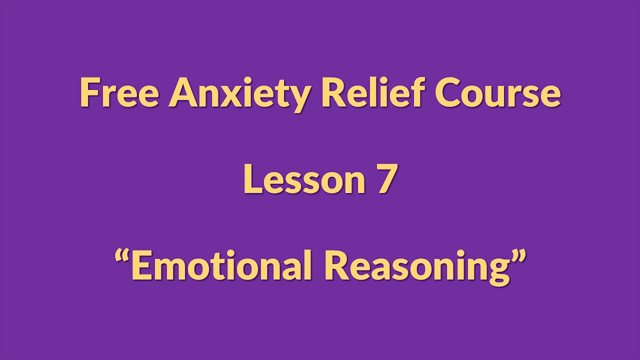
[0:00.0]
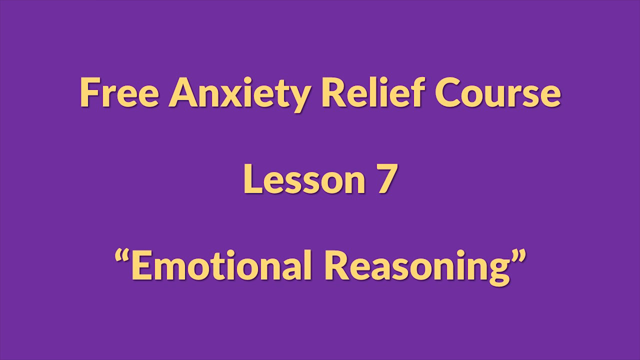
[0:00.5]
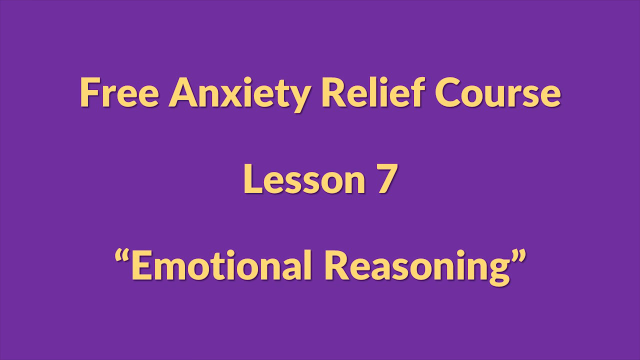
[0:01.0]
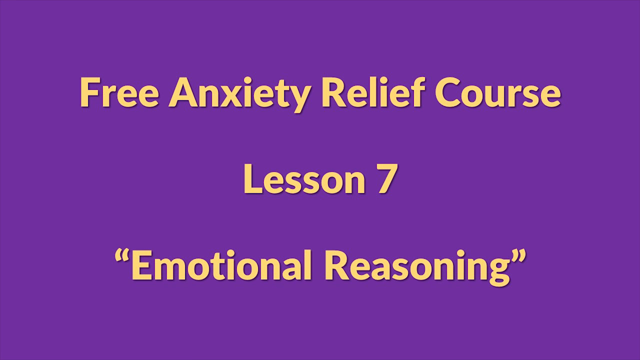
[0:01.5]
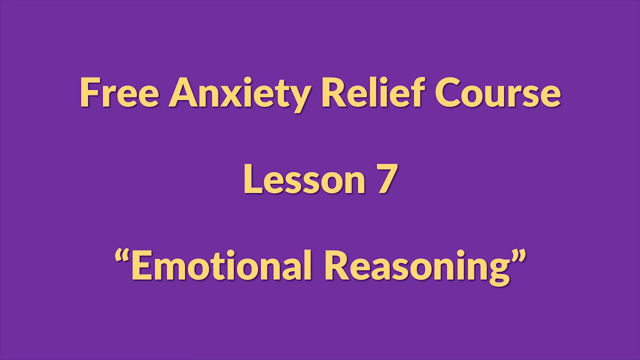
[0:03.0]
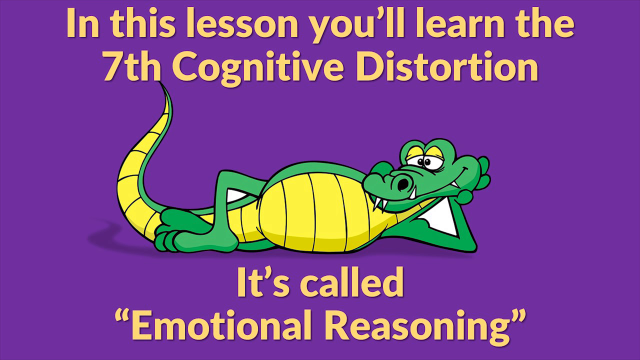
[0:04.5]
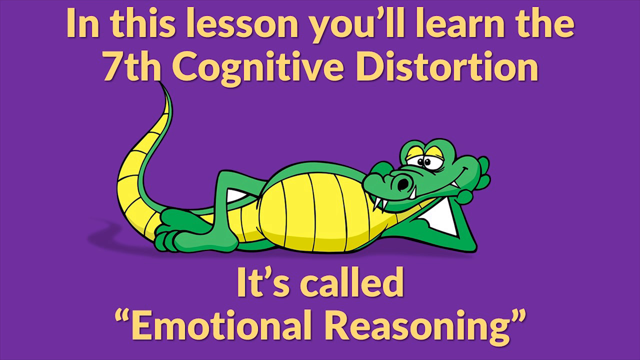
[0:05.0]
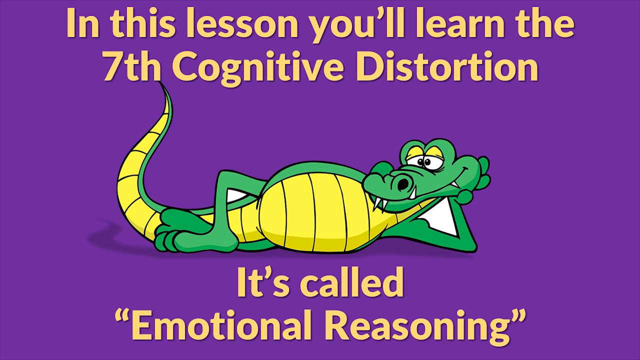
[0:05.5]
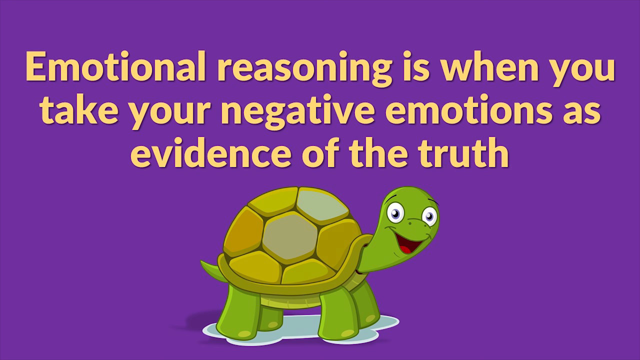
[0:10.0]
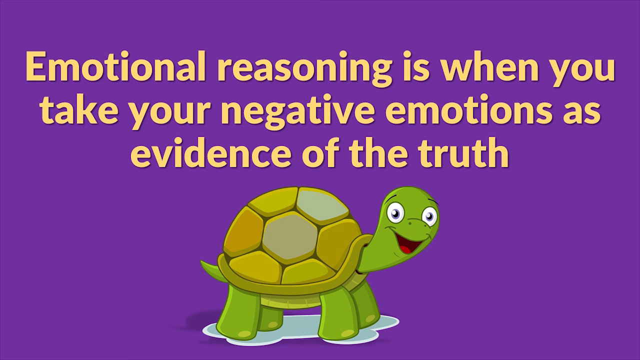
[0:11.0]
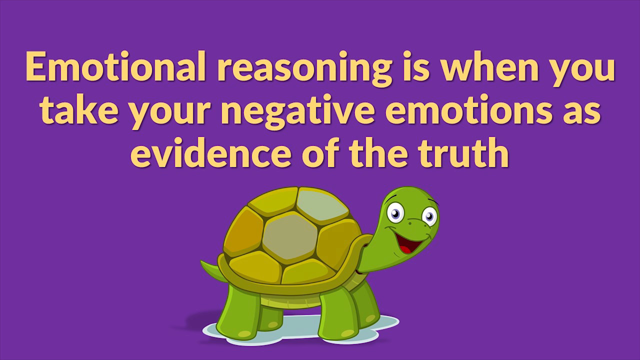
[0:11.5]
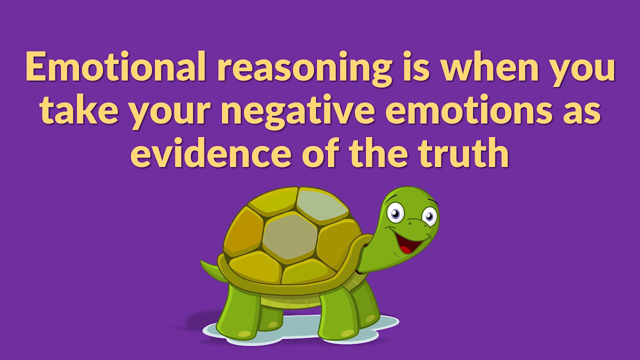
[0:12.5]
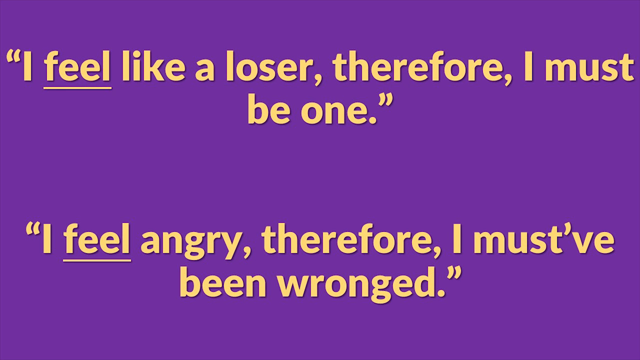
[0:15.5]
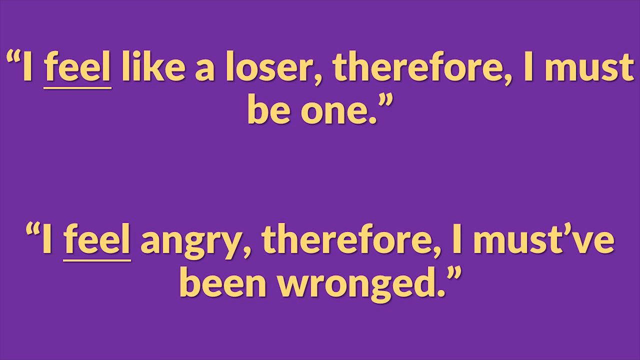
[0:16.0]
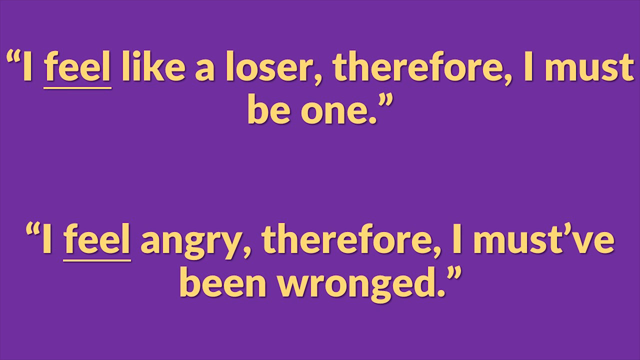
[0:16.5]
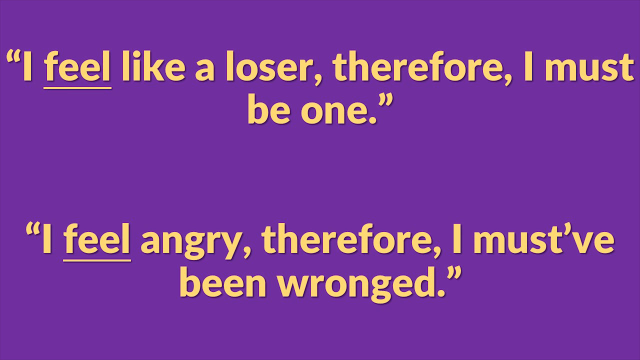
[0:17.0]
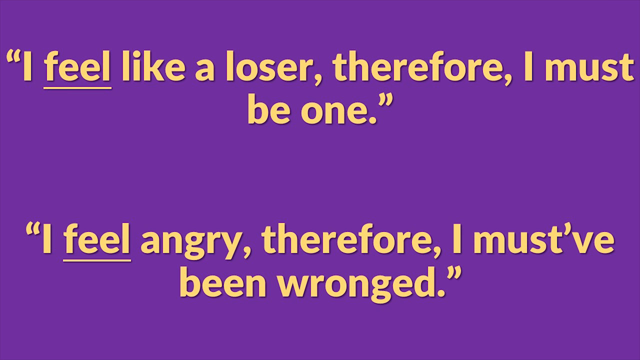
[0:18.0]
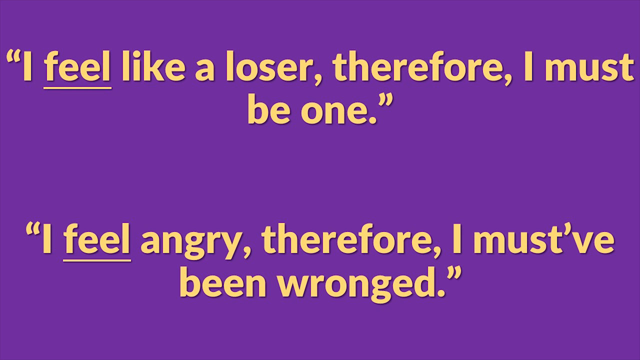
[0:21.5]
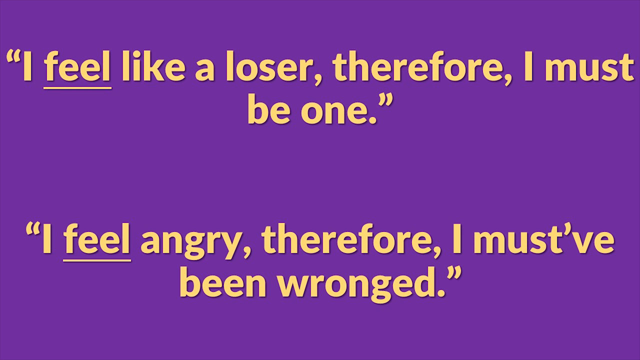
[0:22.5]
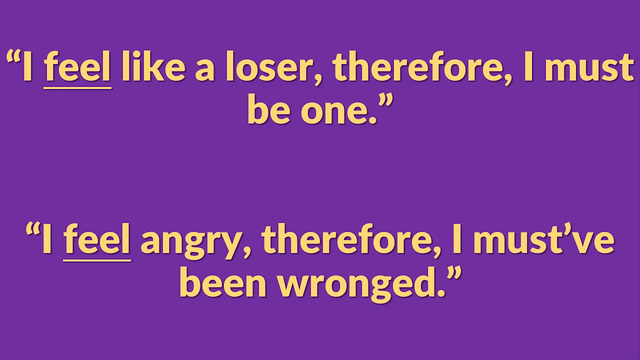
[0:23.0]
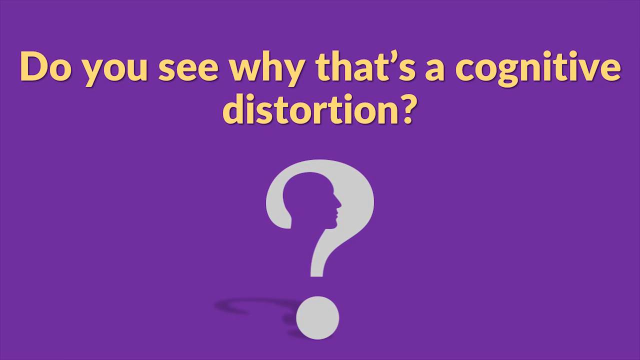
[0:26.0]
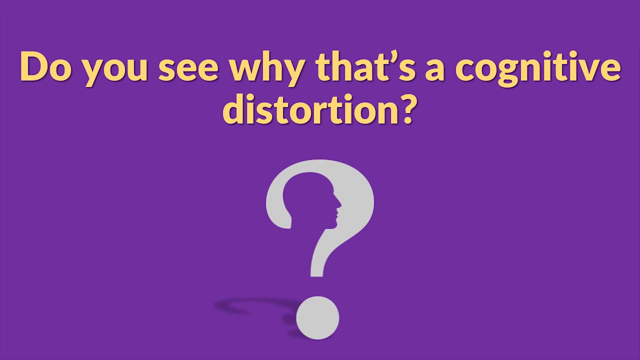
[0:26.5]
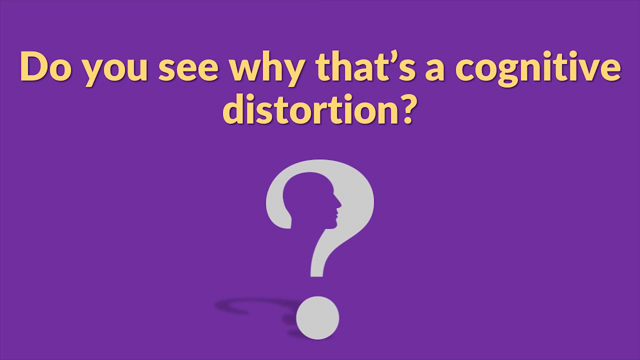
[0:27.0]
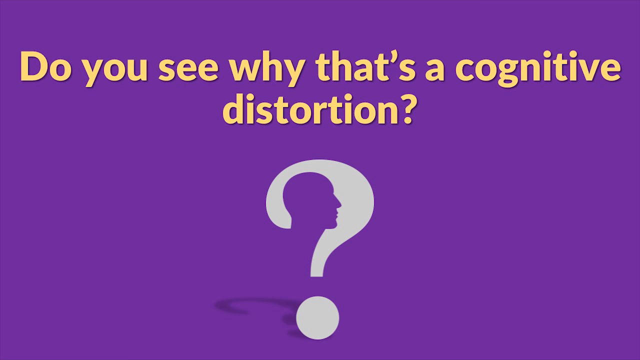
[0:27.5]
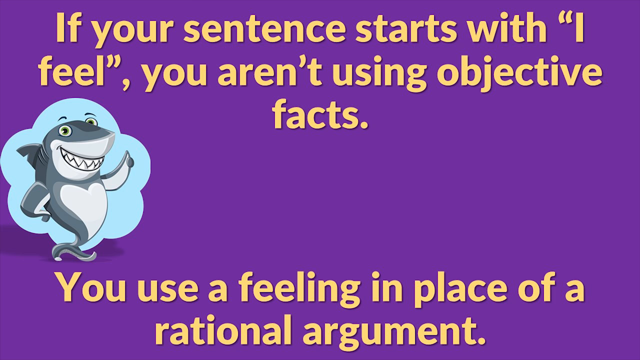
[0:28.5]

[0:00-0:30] The video opens on a purple background with yellow text that reads: "free anxiety relief course lesson 7 'emotional reasoning'". Next comes a screen, still with a purple background, showing a cartoon crocodile and yellow text that says: "in this lesson you will learn the seventh cognitive distortion it's called emotional reasoning". Another screen says: "Emotional reasoning is when you take your negative emotions as evidence of the truth", with an animated turtle standing over a puddle of water. The following screen's text says "I feel like a loser, therefore I must be one", with the word "feel" underlined by a white line. Below it, more text says "I feel angry, therefore I must have been wronged", and "feel" is underlined there too. Next, a screen reads: "Do you see why there is a cognitive distortion?" with a question mark below the text.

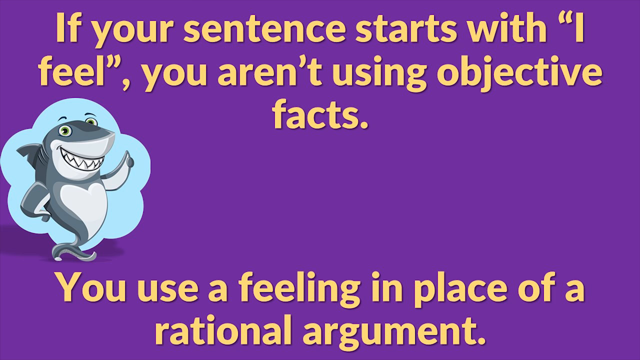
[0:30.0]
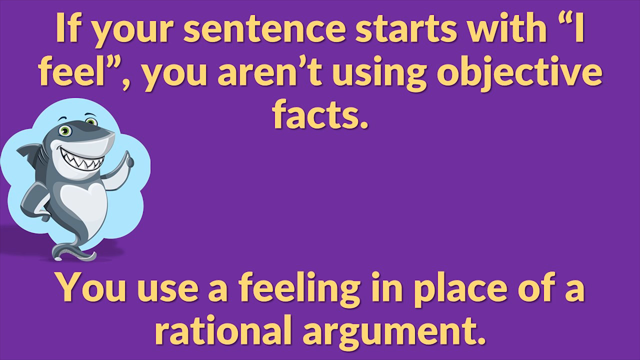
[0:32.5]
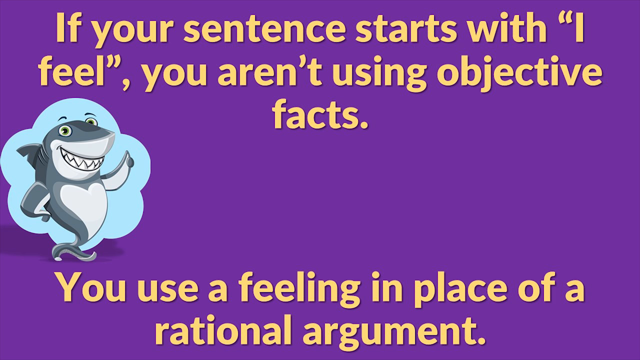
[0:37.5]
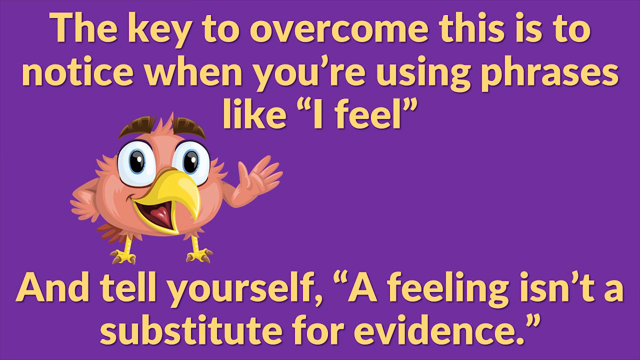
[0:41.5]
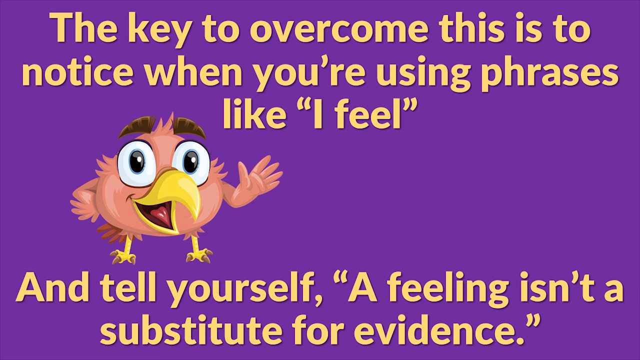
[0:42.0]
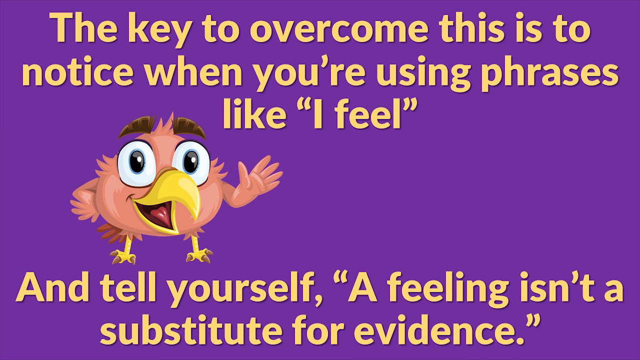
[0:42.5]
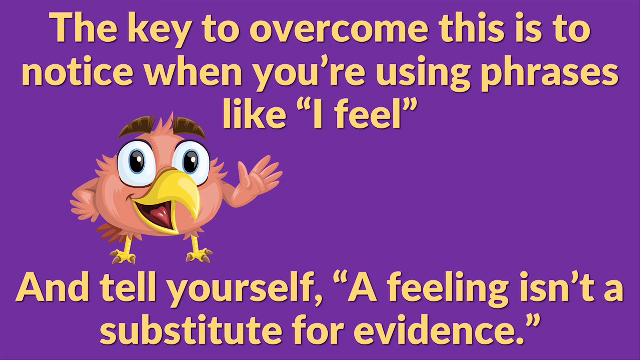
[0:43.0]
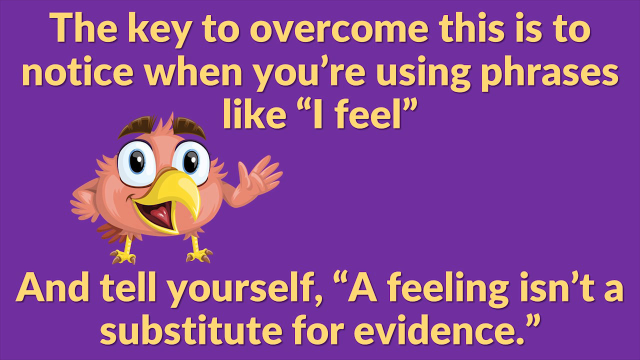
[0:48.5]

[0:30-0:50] On a purple background, text reads: "If your sentence starts with I feel, you aren't using objective facts;". A blue animated shark is on the left side of this text. Below it, more text reads: "You use a feeling in place of argument". The next screen has text reading: "The key to overcome this is to notice when you are using phrases like I feel." An animation of a chicken appears, and below it text reads: "and tell yourself a feeling isn't a substitute for evidence."